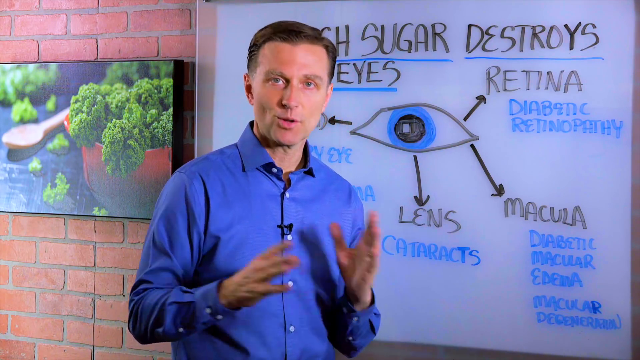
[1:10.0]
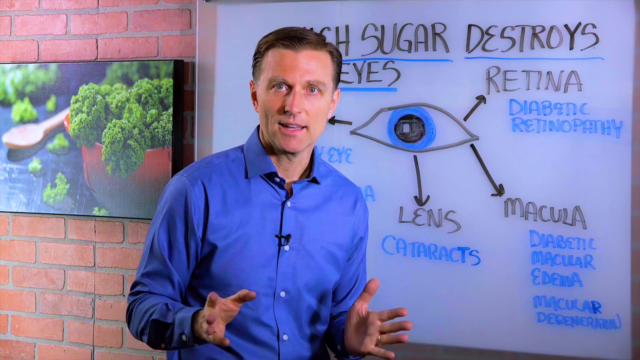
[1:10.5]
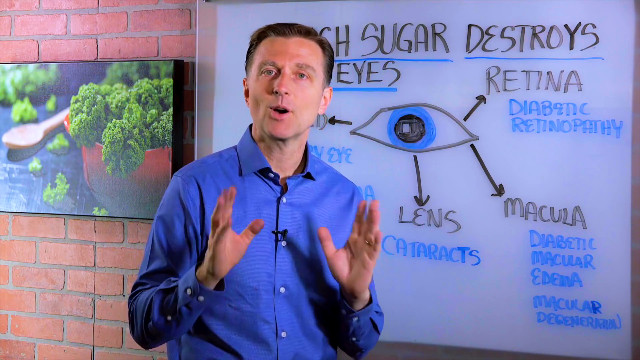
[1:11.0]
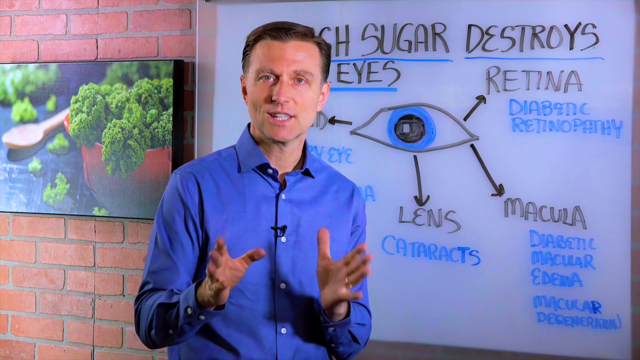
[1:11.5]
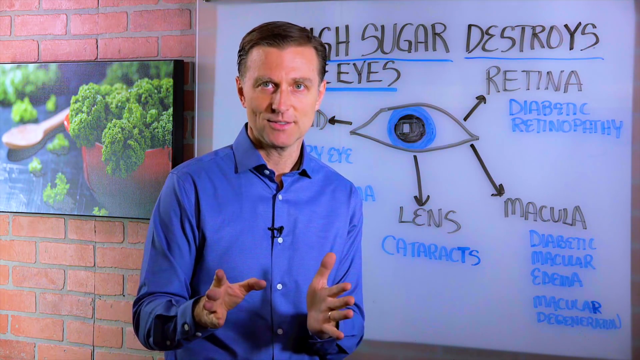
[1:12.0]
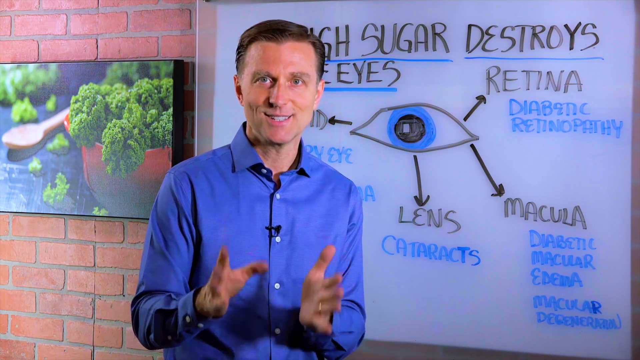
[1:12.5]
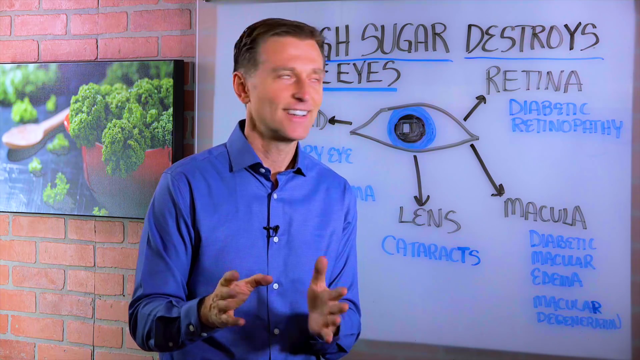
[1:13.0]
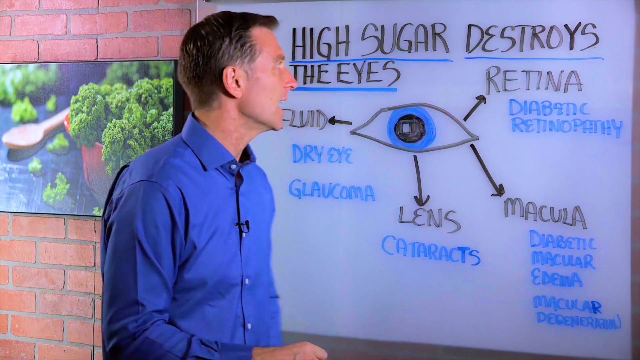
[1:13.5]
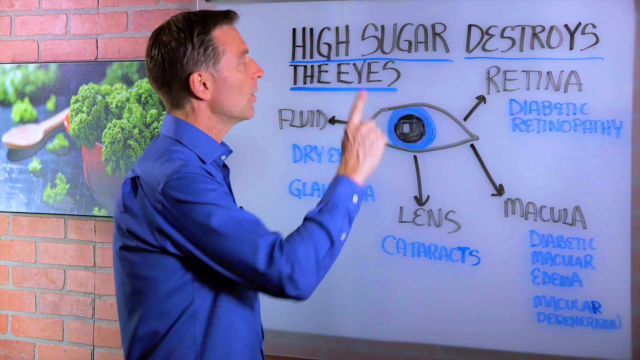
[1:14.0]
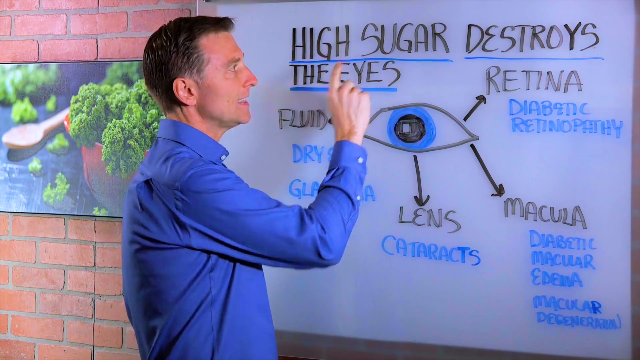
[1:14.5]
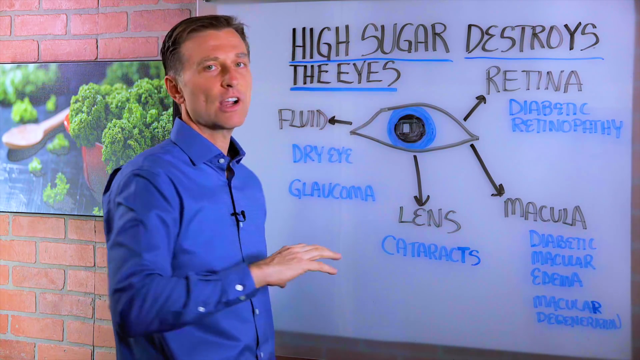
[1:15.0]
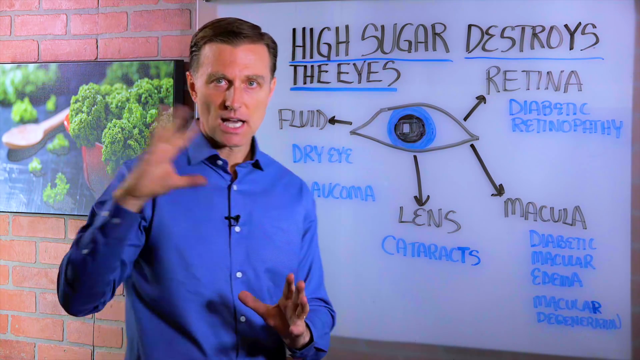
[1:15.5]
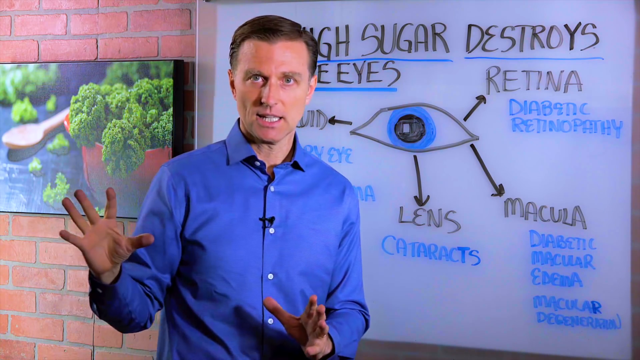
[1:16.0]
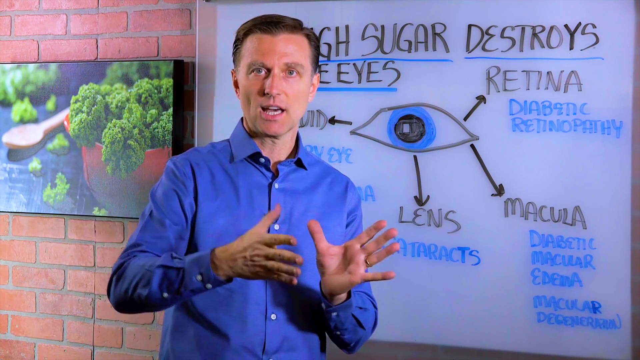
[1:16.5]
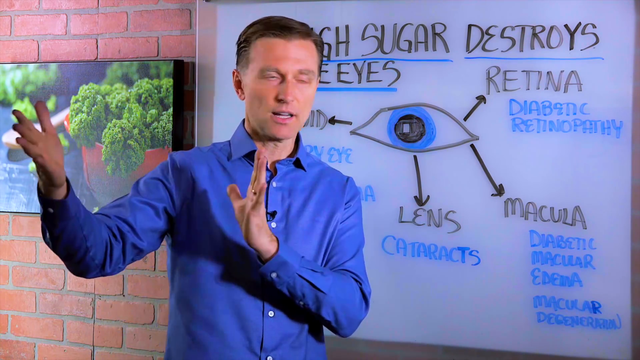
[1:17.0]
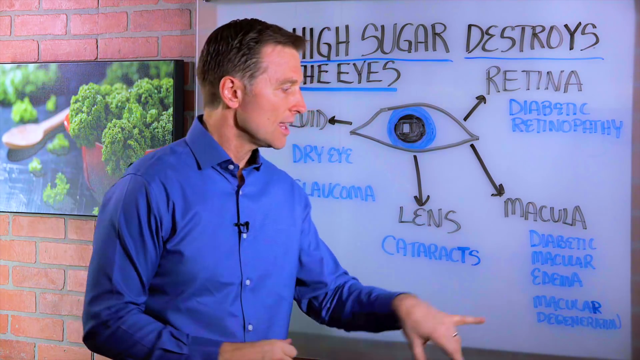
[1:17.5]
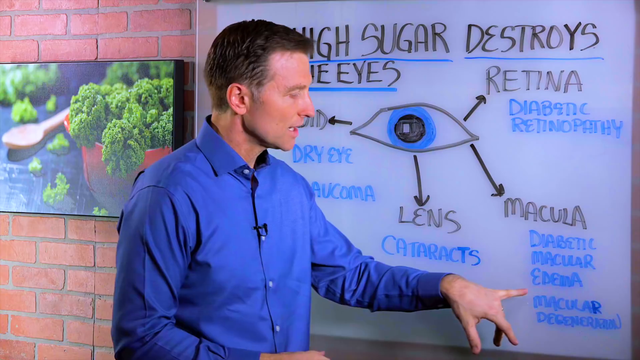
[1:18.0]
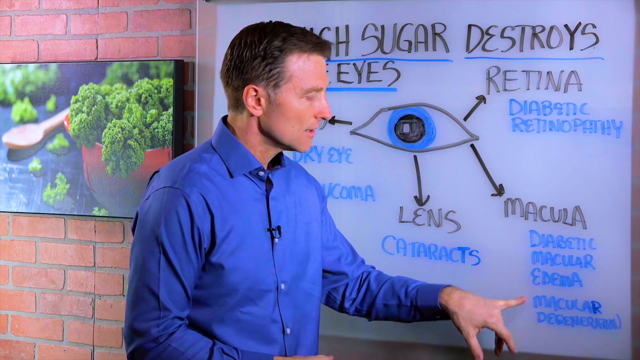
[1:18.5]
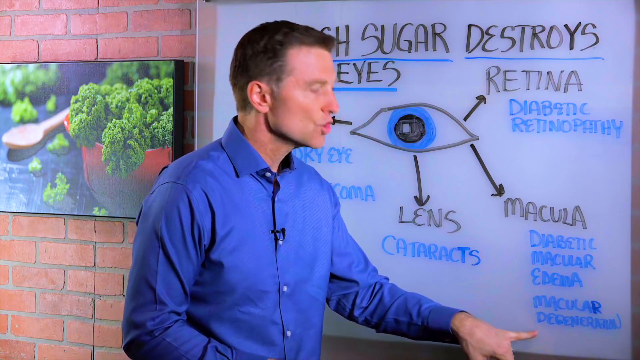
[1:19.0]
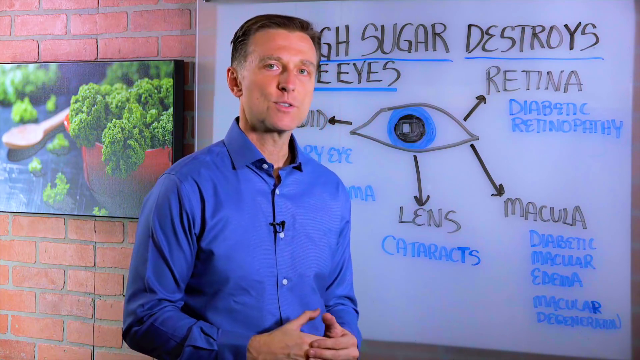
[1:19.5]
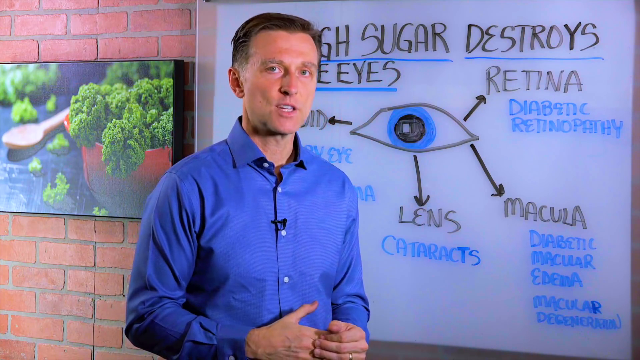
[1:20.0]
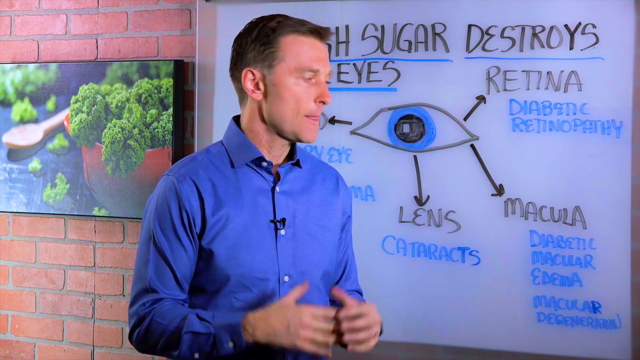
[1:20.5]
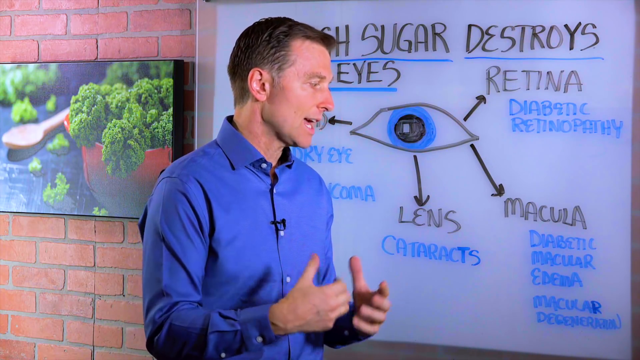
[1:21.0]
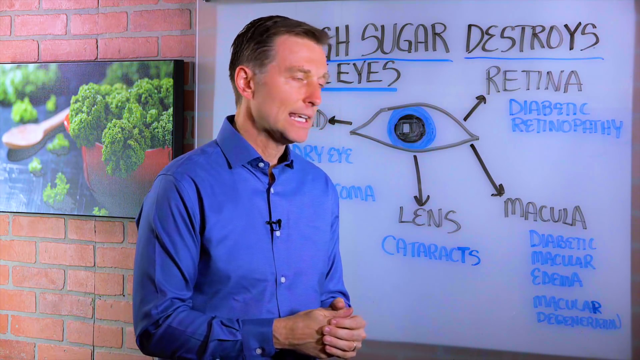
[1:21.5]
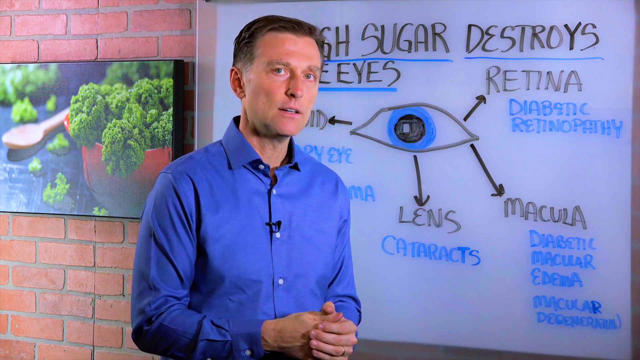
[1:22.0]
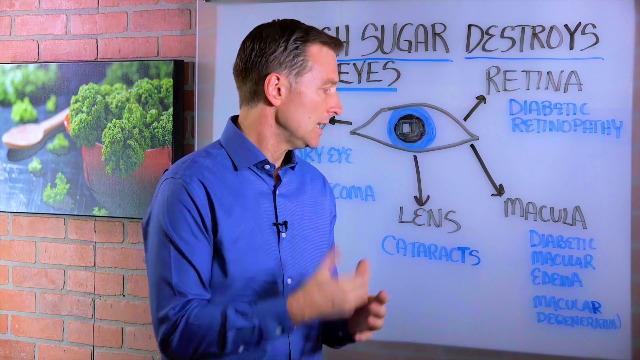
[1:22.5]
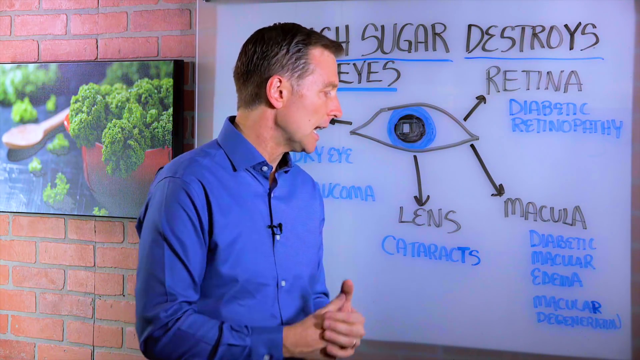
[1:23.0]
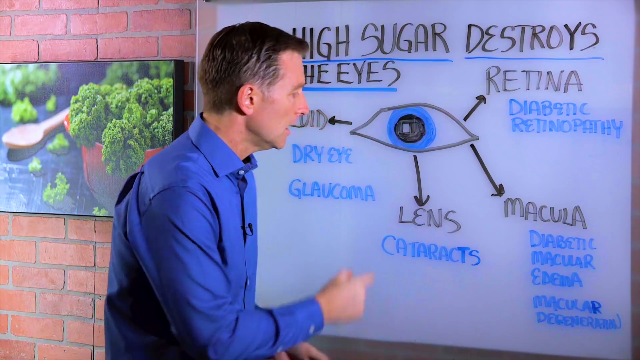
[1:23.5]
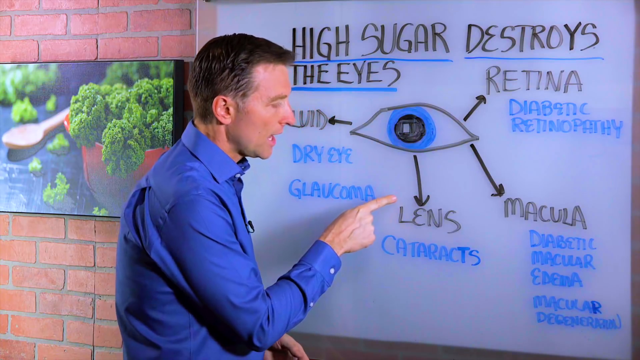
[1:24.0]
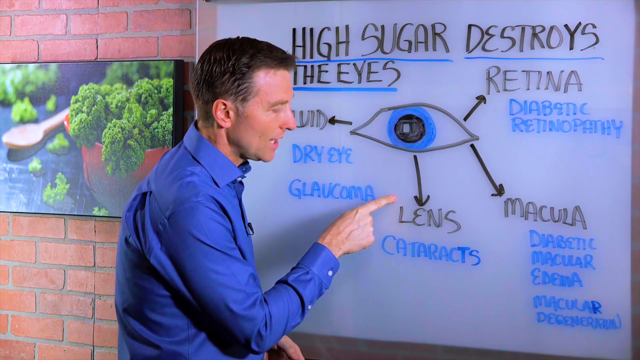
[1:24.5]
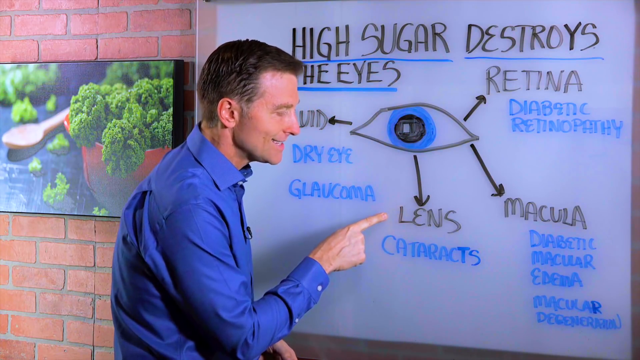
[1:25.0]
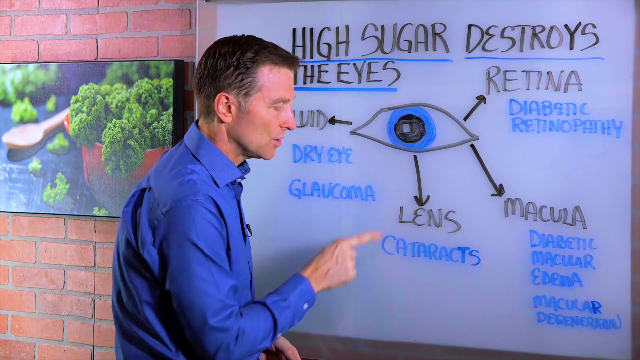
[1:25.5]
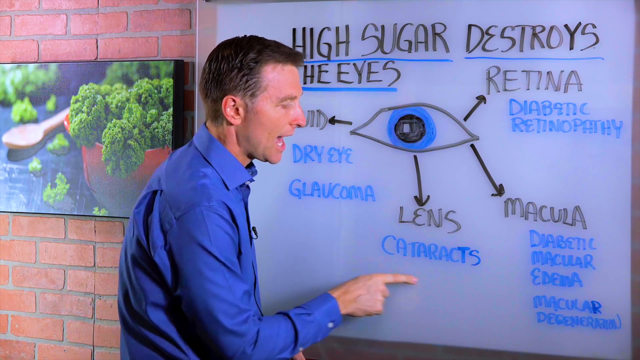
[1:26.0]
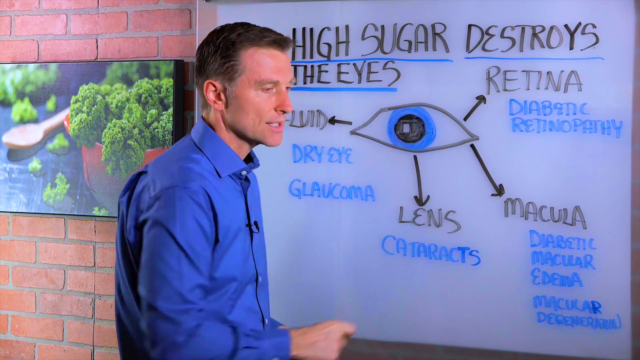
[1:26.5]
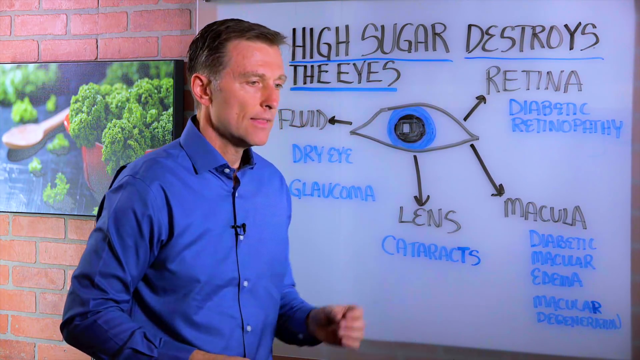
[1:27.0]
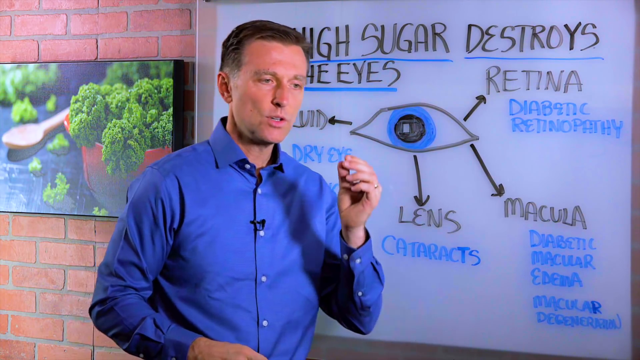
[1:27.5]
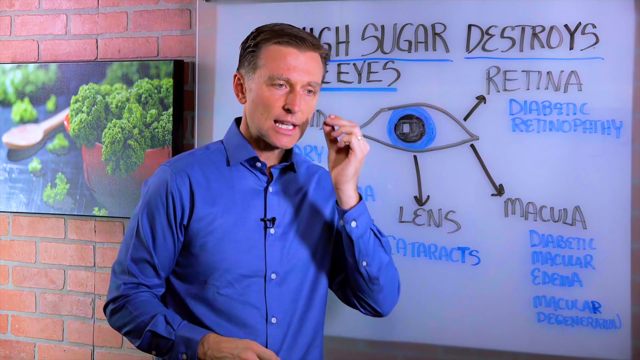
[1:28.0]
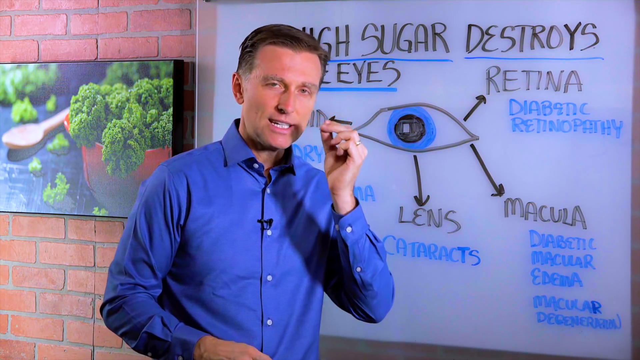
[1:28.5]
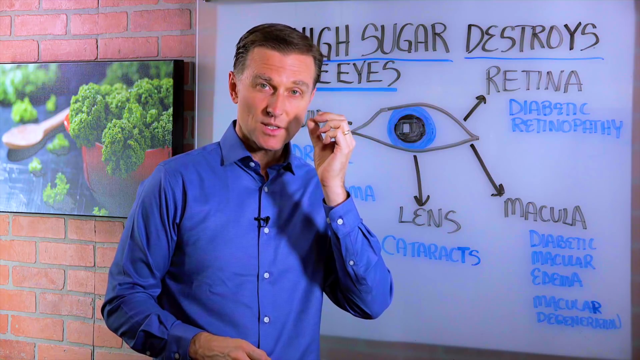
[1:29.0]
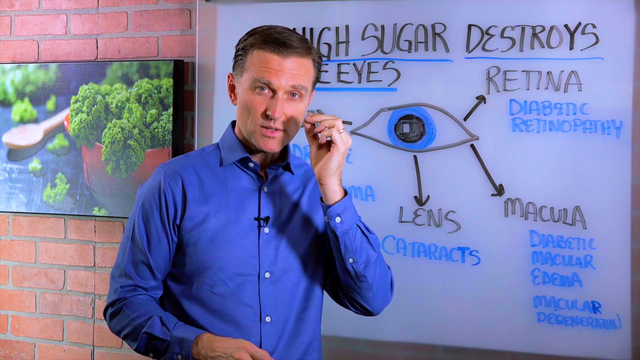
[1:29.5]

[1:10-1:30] Dr. Berg, a Caucasian man with dark brown hair and a clean-shaven face who looks to be in his mid to late 40s, stands indoors with a whiteboard behind him, attached to a red brick wall. On the left is a photo of a bowl of broccoli. Facing the camera in front of the whiteboard, he shakes his hands up and down with palms facing each other and keeps pointing to words such as "macular degeneration" in the lower right corner and "diabetic macular edema." He then turns his body slightly and points with his right pointer finger to the word "lens" below the eye, and underneath it to the word "cataracts," written in blue dry erase marker. As the shot ends, his left hand comes up and seems to point toward his left eye.